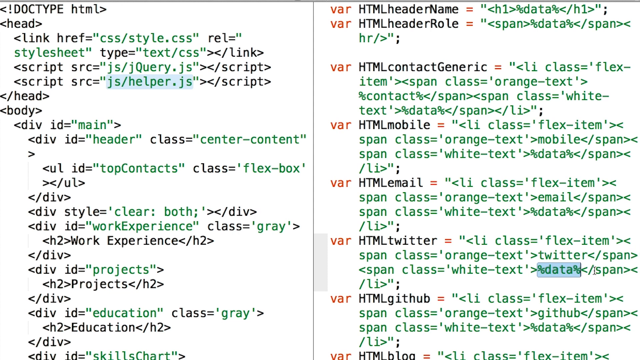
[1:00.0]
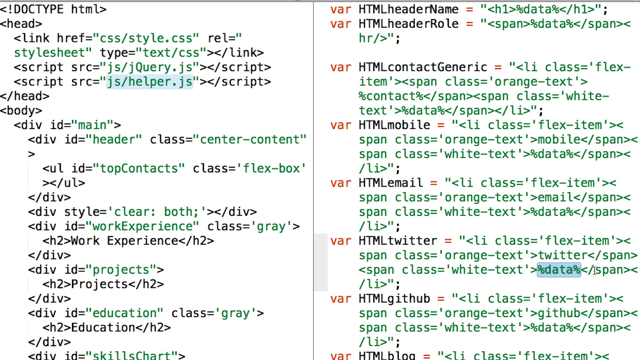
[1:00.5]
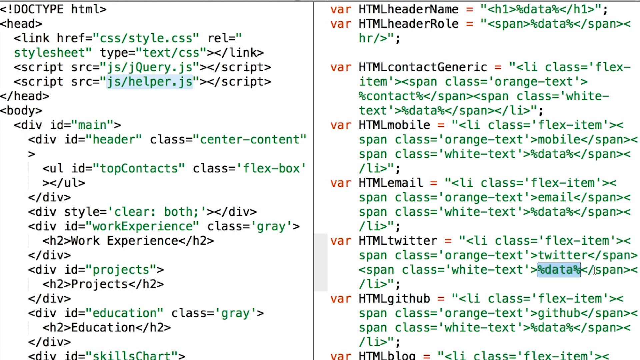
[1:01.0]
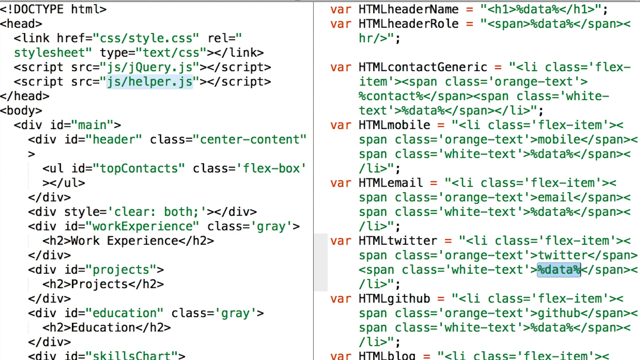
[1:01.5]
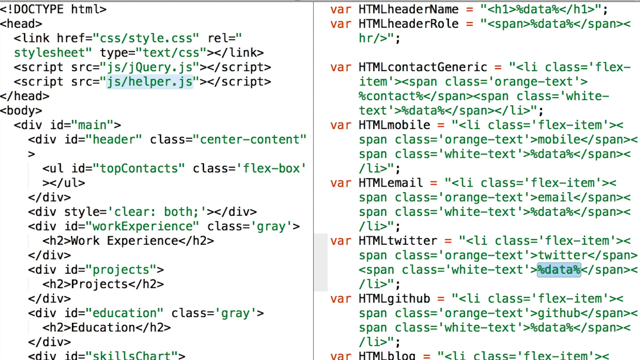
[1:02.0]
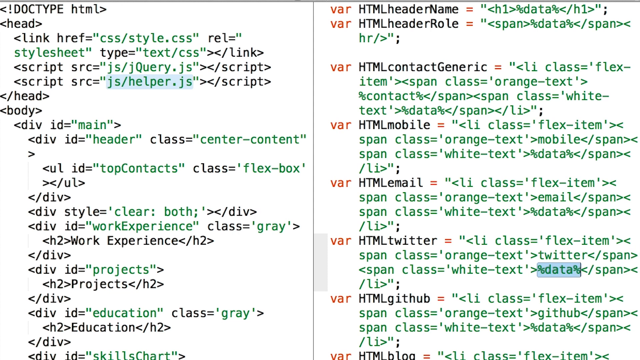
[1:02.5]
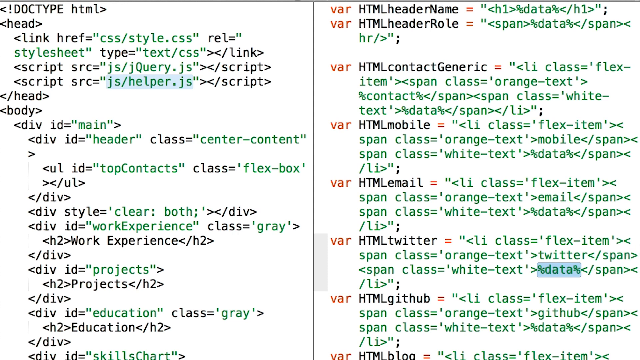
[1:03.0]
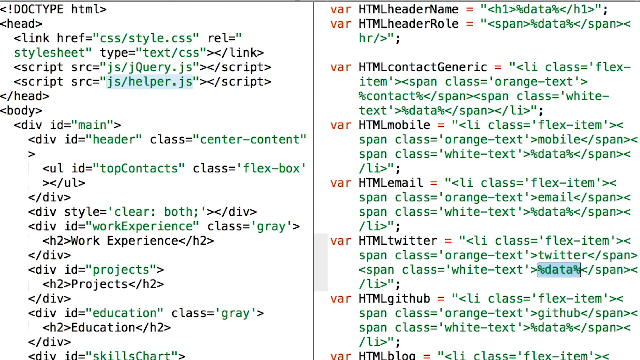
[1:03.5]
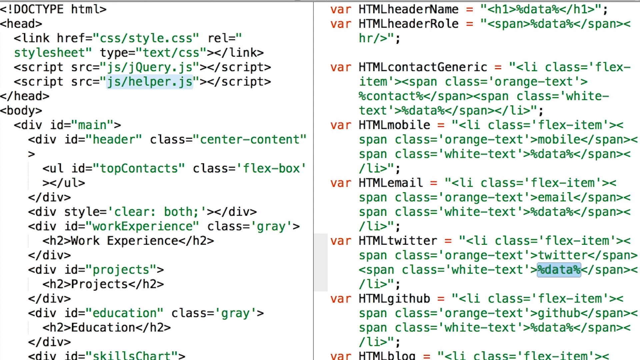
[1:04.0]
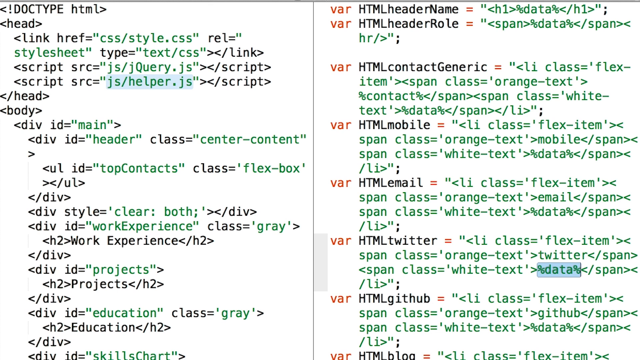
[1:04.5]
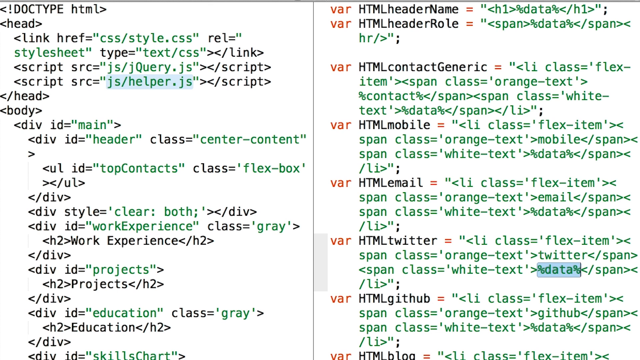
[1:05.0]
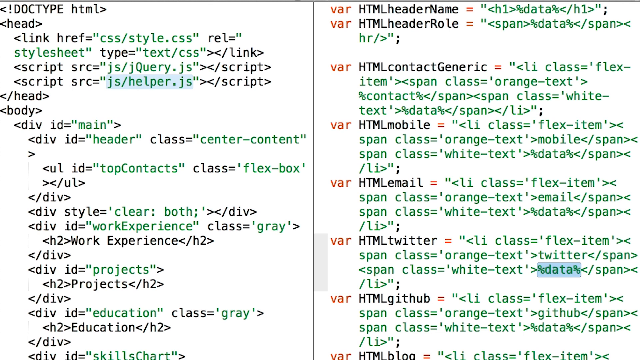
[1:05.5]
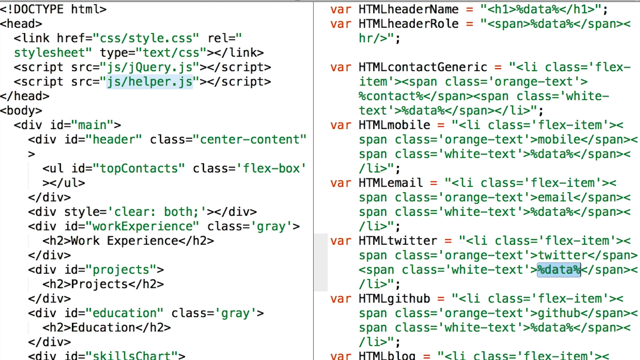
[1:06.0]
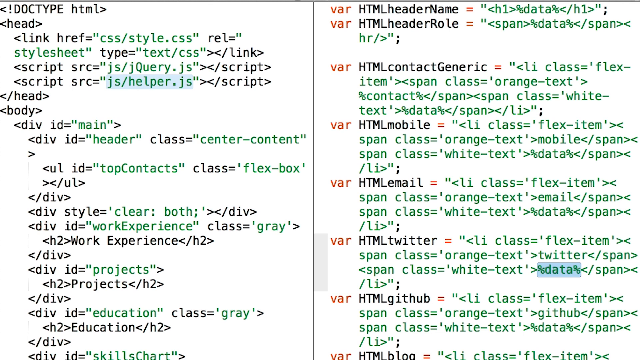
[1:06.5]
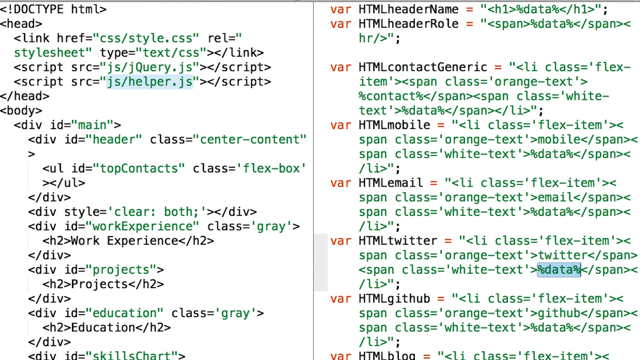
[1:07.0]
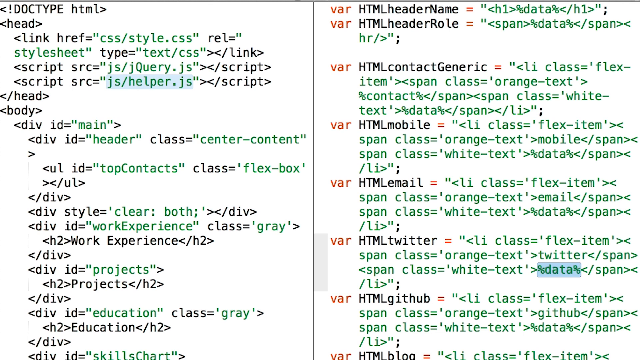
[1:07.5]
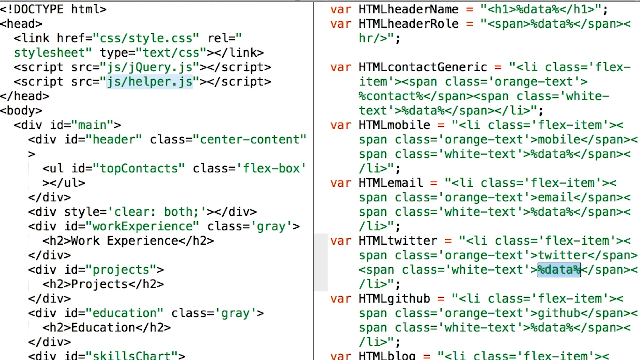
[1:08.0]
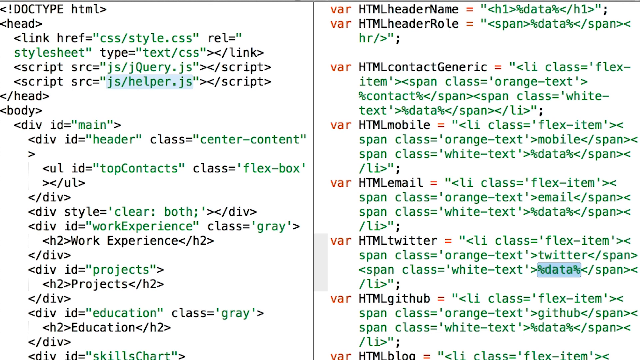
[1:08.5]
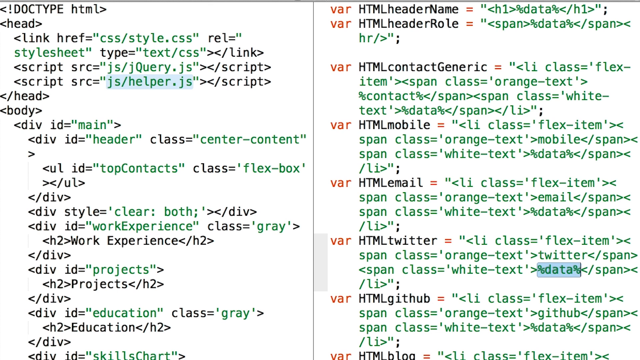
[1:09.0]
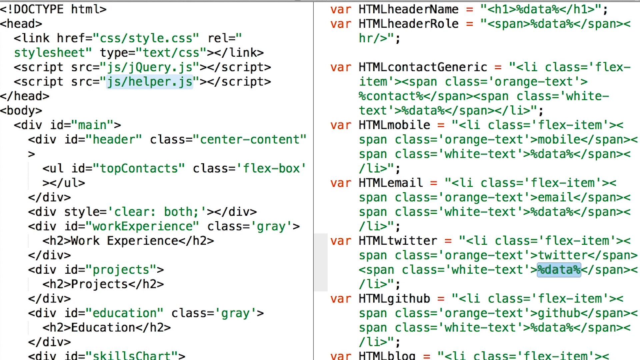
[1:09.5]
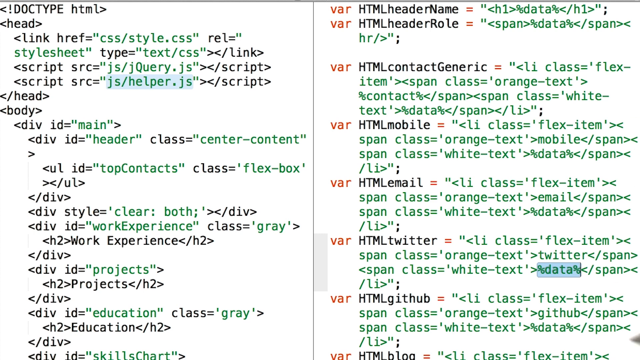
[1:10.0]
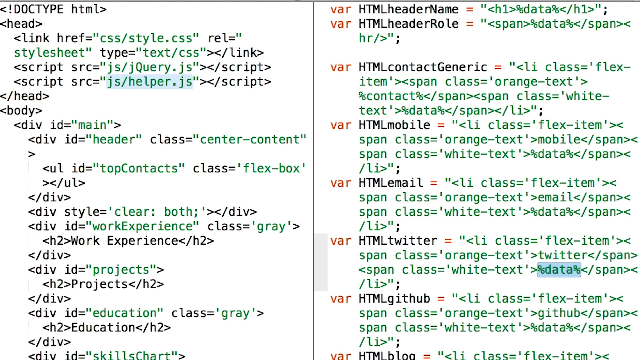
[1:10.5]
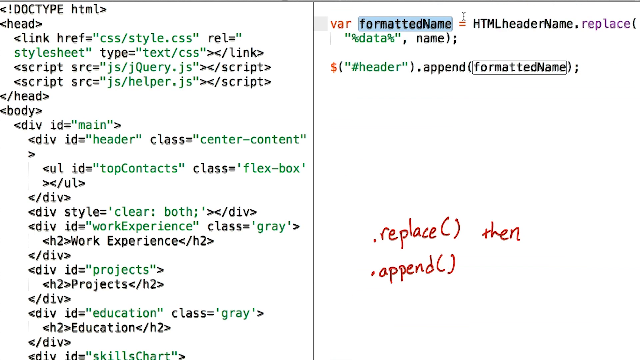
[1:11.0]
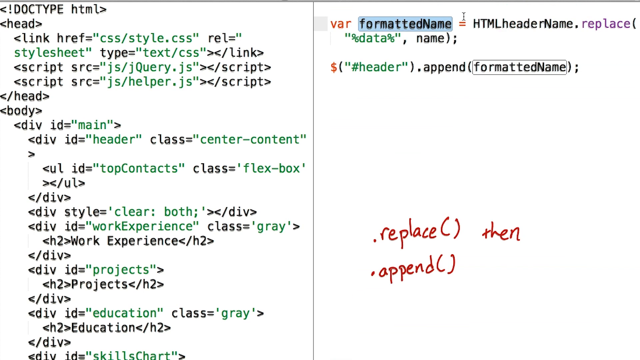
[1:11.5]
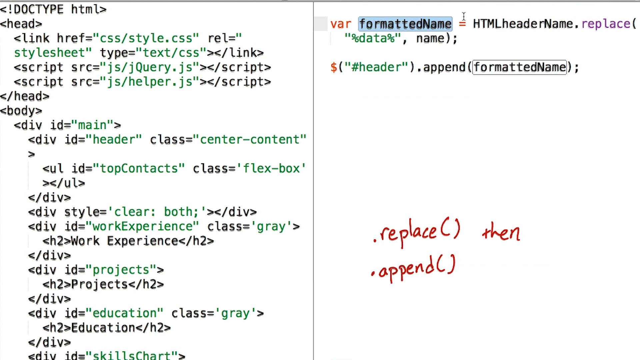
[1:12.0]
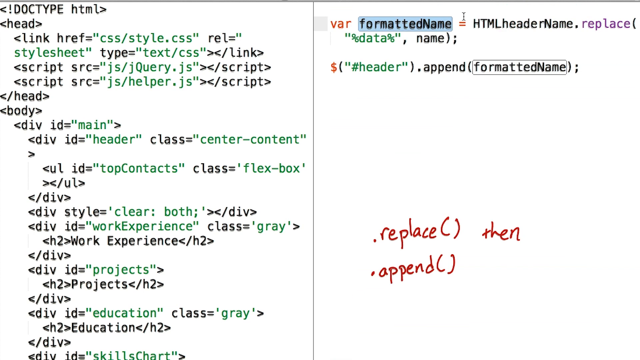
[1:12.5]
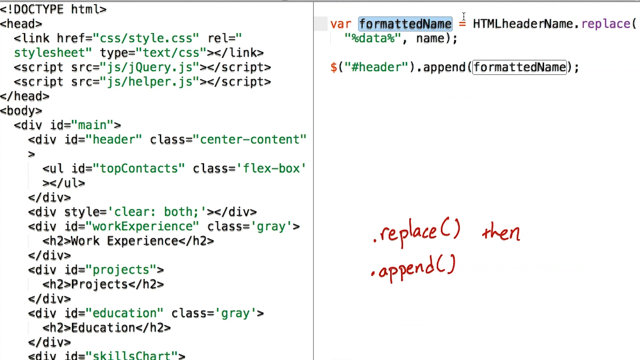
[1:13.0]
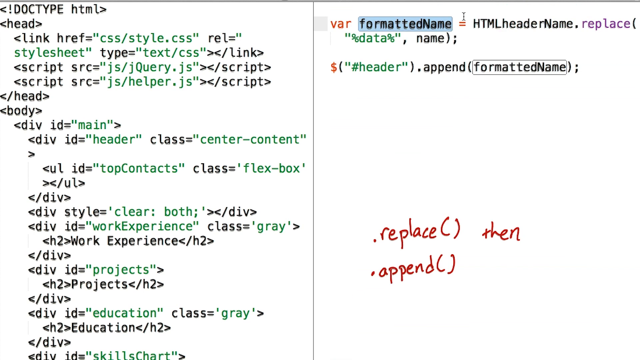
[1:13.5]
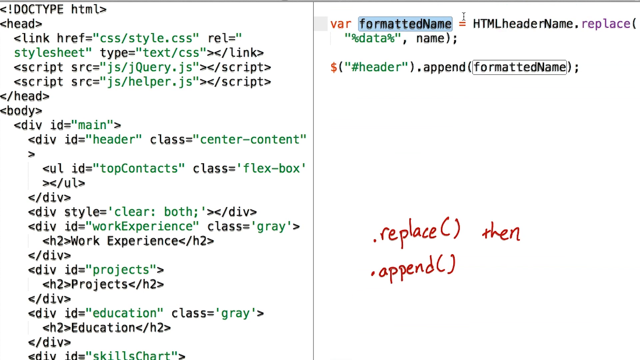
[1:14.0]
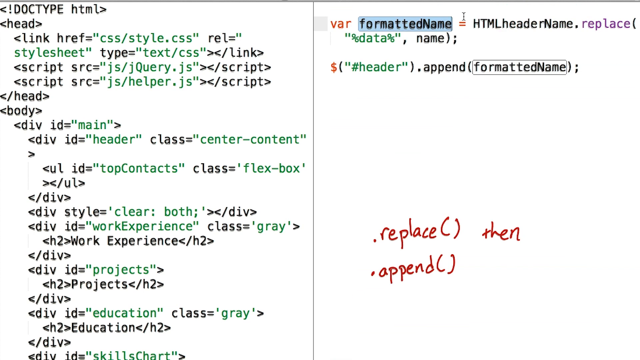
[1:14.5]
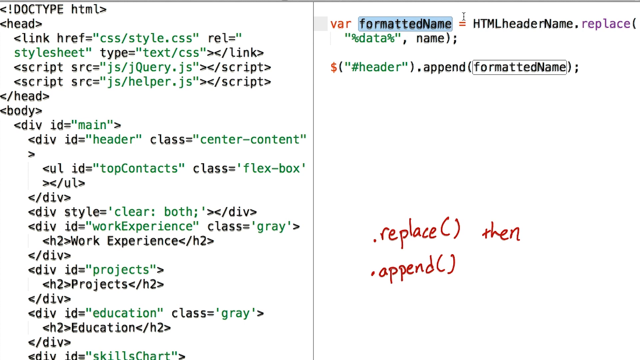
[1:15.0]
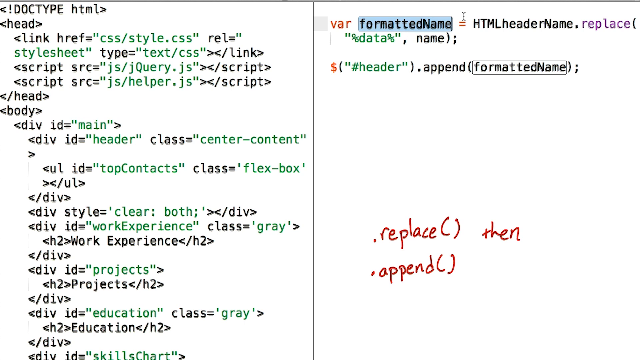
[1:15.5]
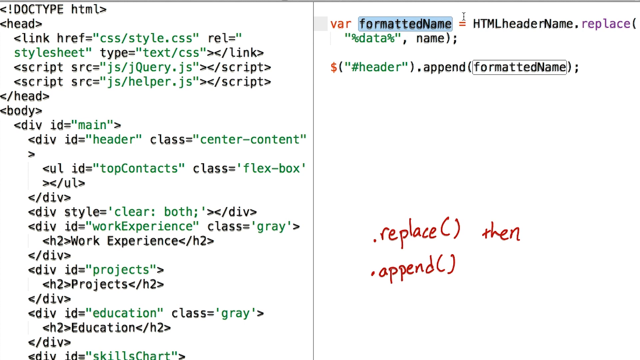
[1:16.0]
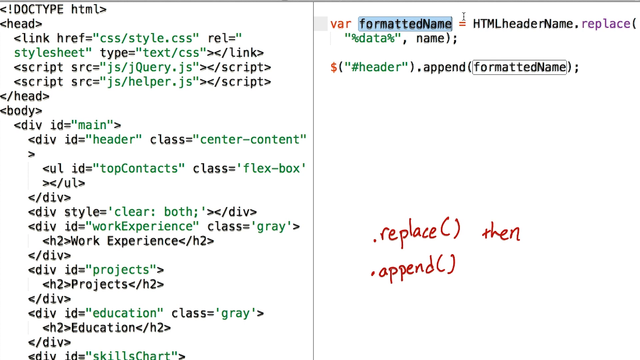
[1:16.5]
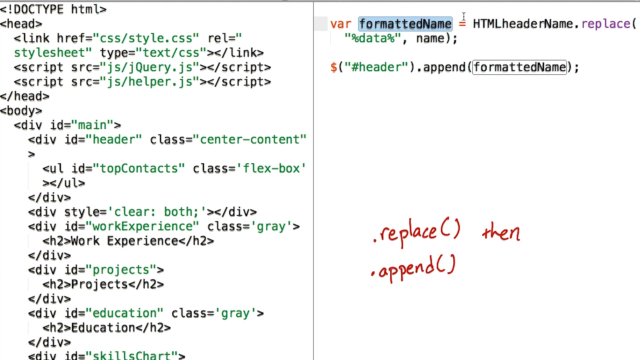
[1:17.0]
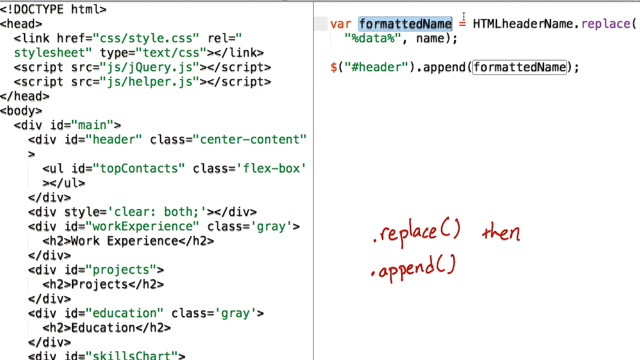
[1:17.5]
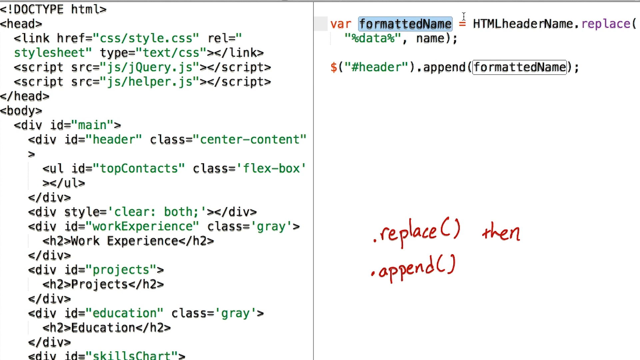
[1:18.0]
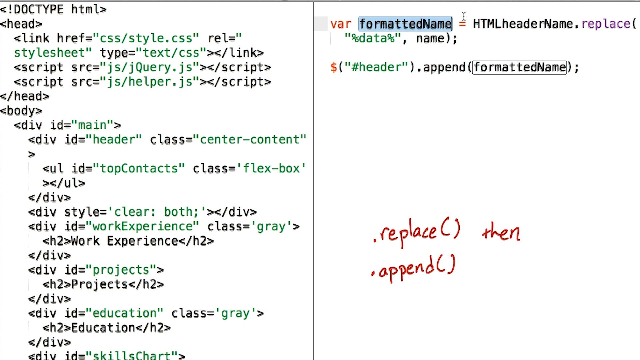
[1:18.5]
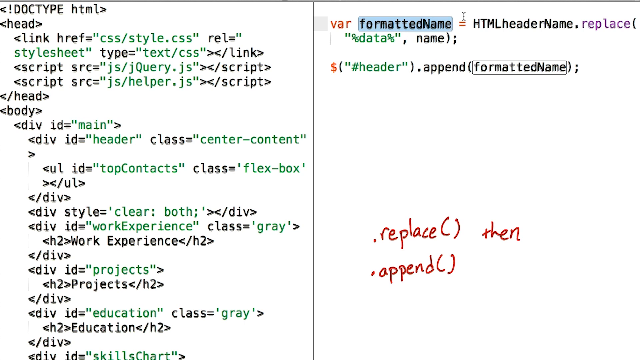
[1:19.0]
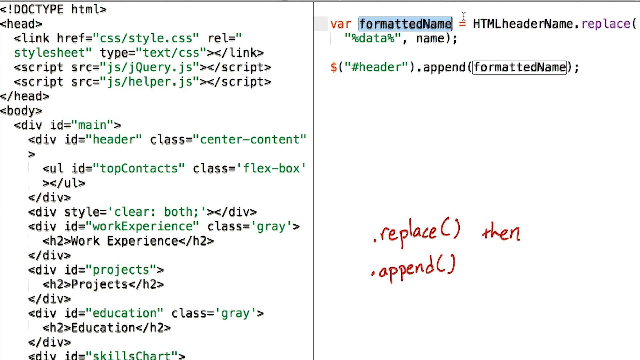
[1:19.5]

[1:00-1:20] The percent data in var HTML Twitter stays highlighted, and nothing else happens for a while. The right side of the screen is then replaced with new code. One line reads var formatted name equals HTML header name dot replace, with brackets containing "%data%" in quotes, a comma and "name", ending in a semicolon. The next line has a dollar sign and brackets containing "#header" in quotes, followed by dot append with formatted name in brackets and a semicolon. Nothing else happens for the rest of the shot.